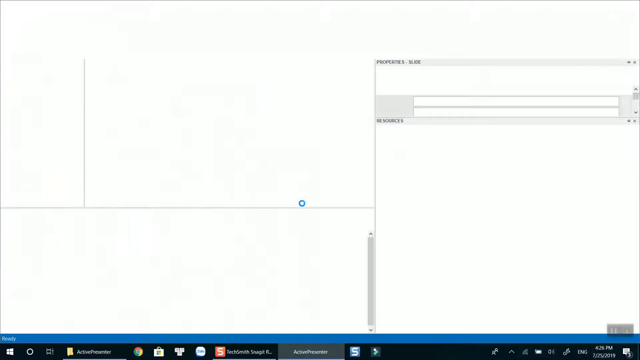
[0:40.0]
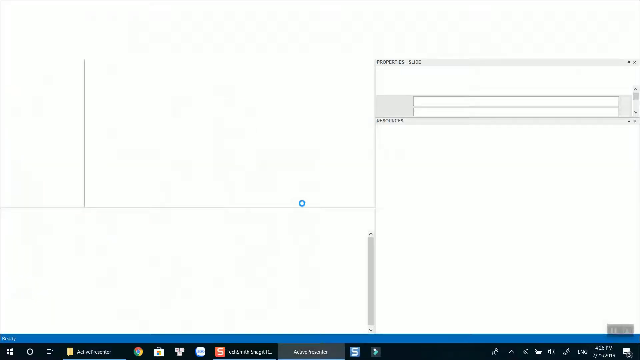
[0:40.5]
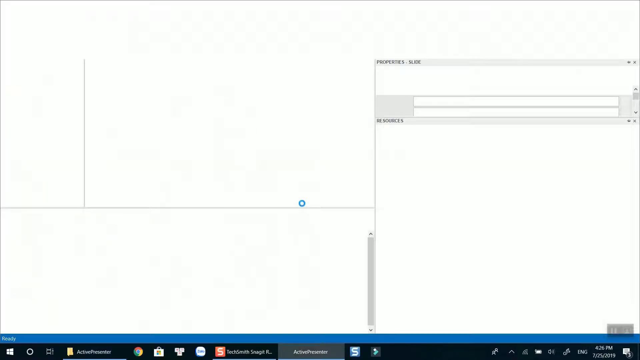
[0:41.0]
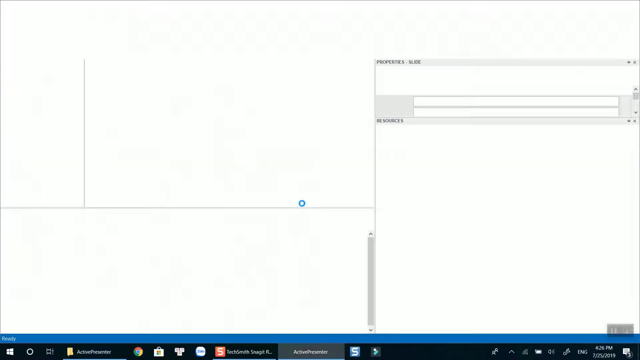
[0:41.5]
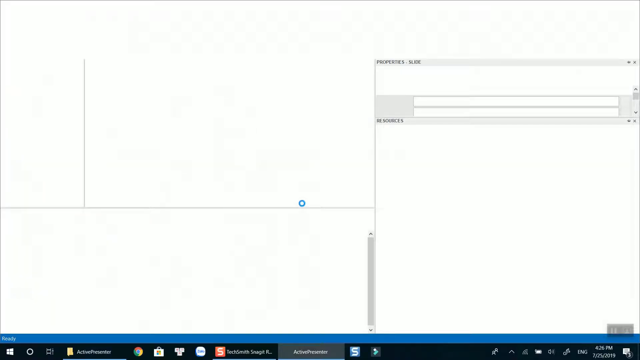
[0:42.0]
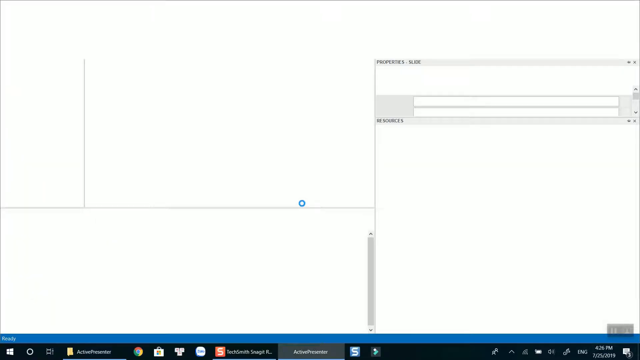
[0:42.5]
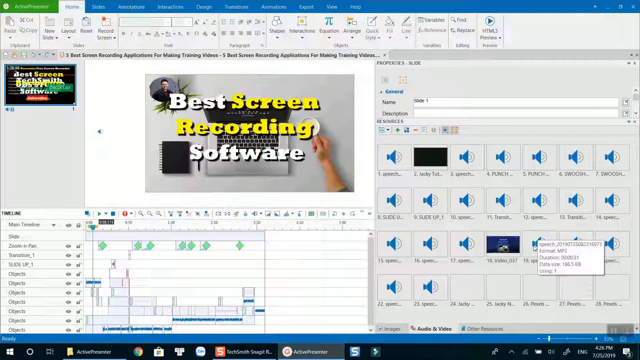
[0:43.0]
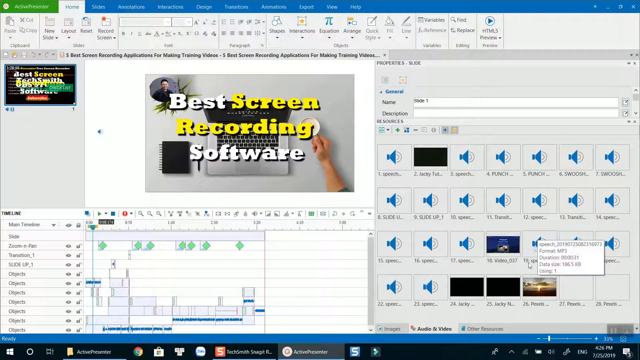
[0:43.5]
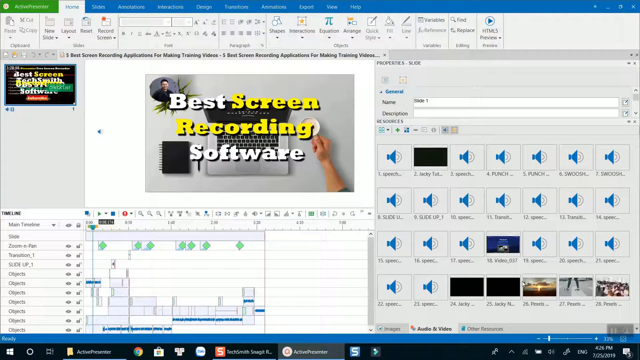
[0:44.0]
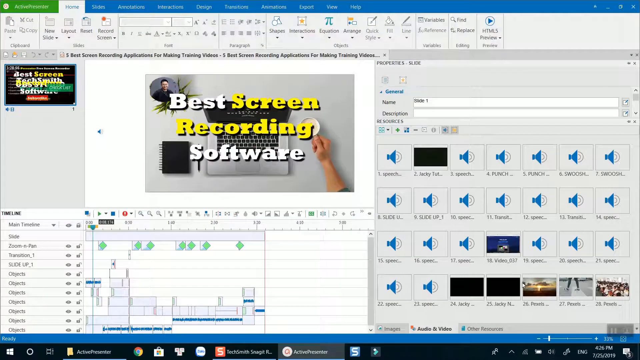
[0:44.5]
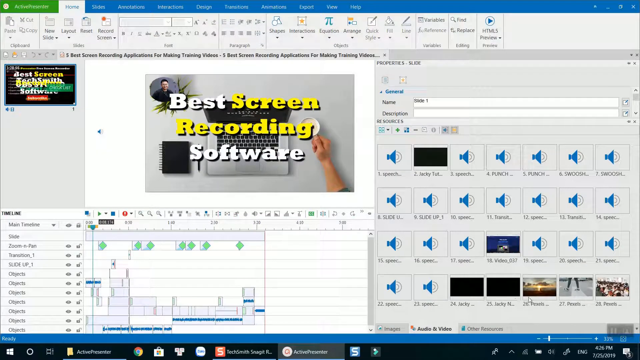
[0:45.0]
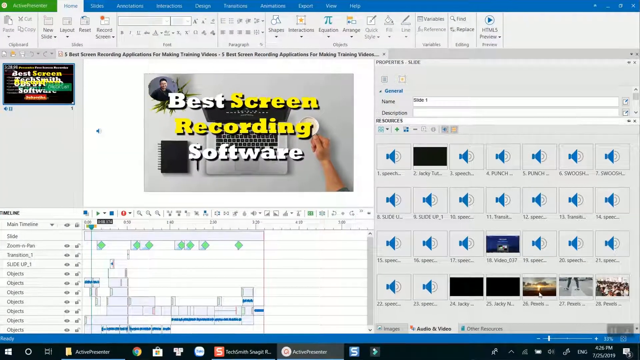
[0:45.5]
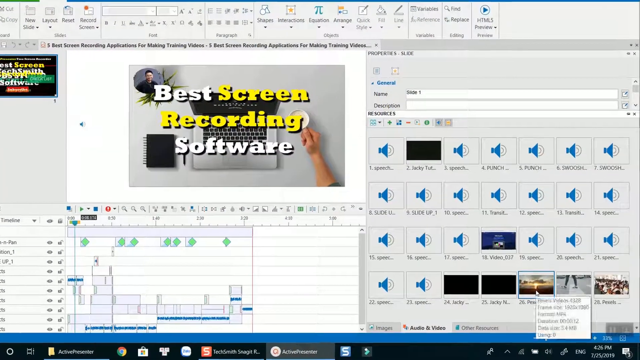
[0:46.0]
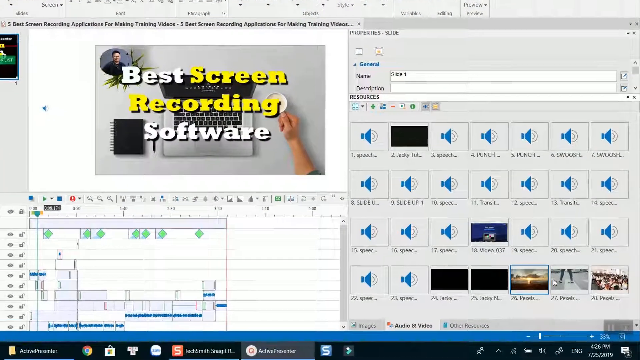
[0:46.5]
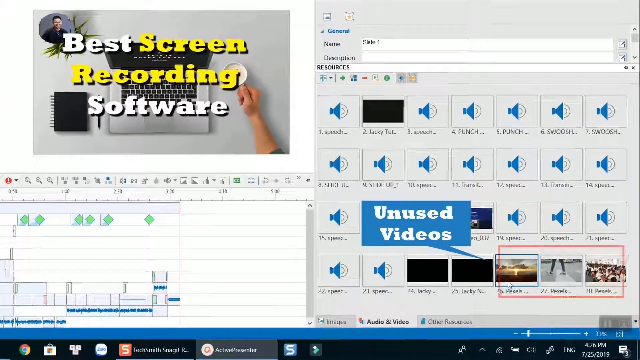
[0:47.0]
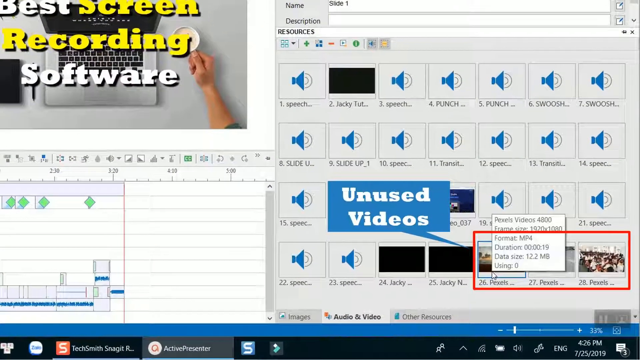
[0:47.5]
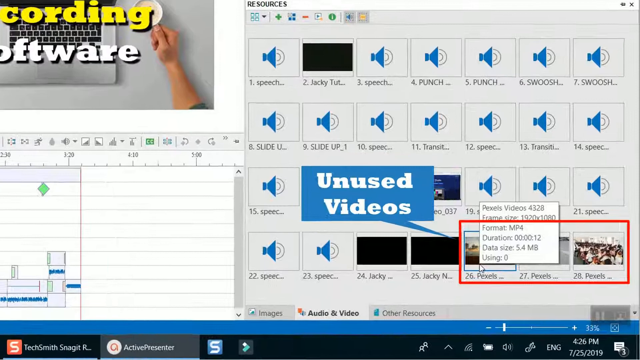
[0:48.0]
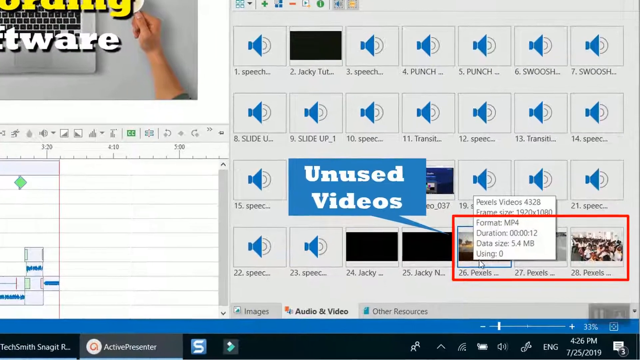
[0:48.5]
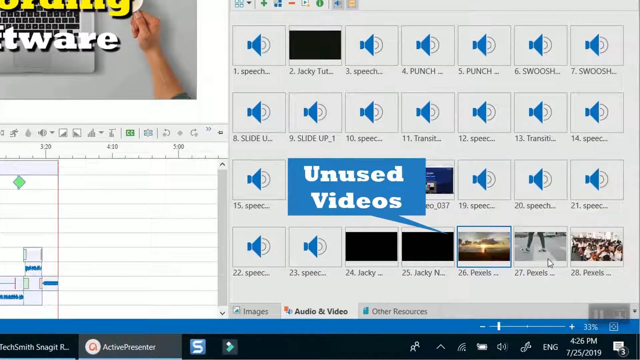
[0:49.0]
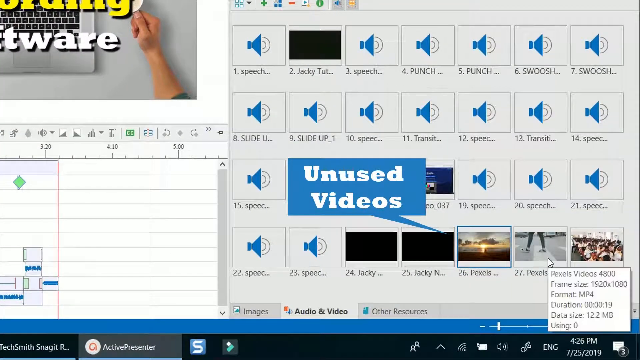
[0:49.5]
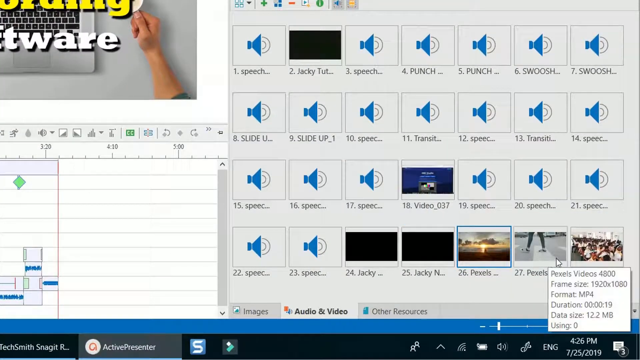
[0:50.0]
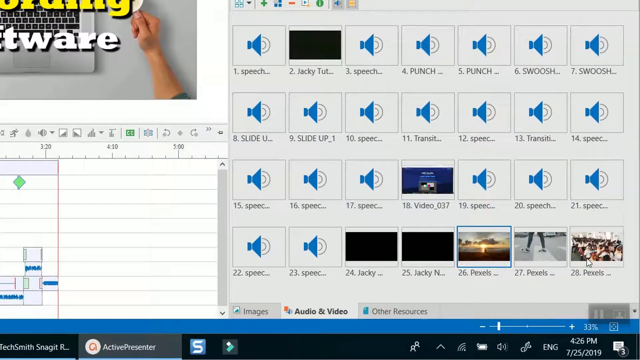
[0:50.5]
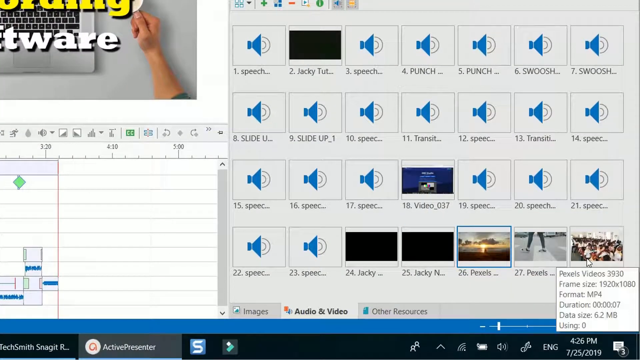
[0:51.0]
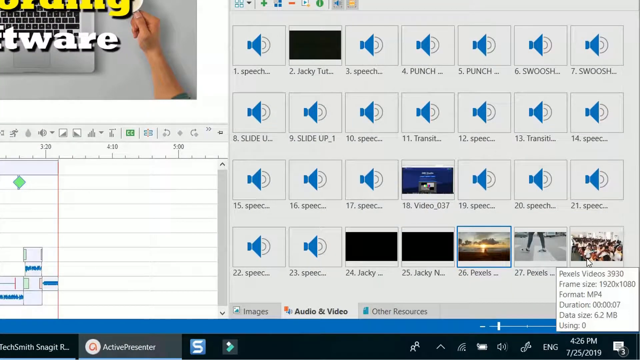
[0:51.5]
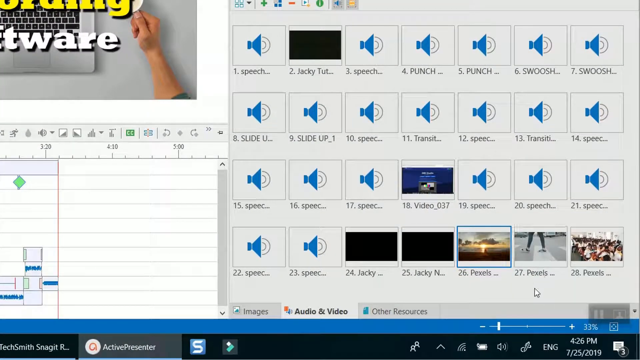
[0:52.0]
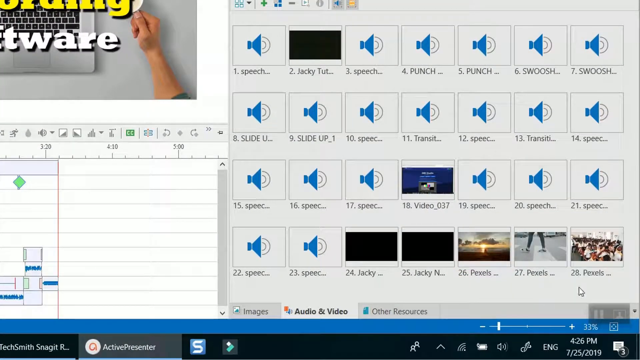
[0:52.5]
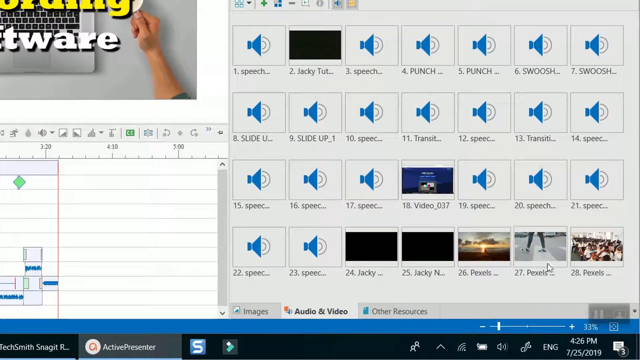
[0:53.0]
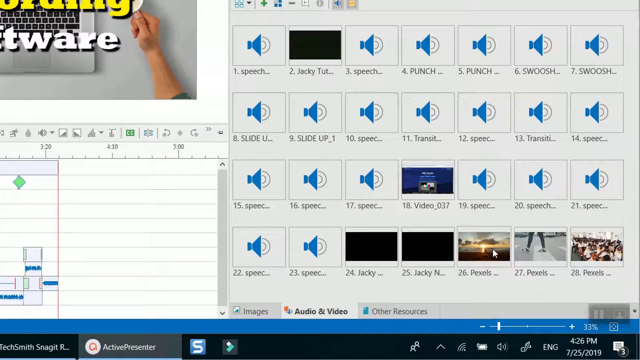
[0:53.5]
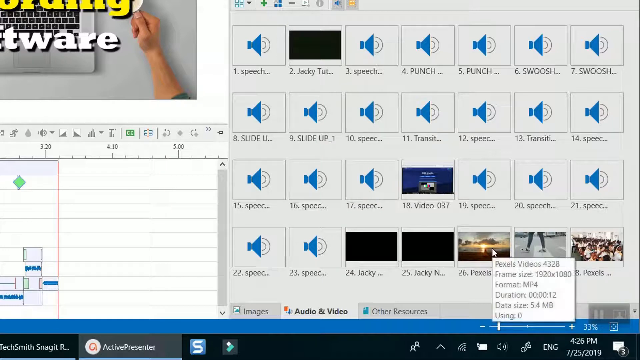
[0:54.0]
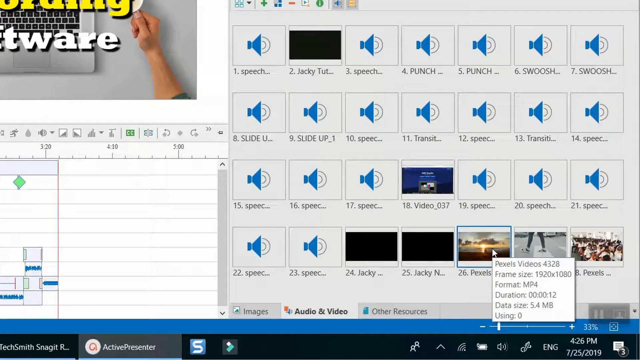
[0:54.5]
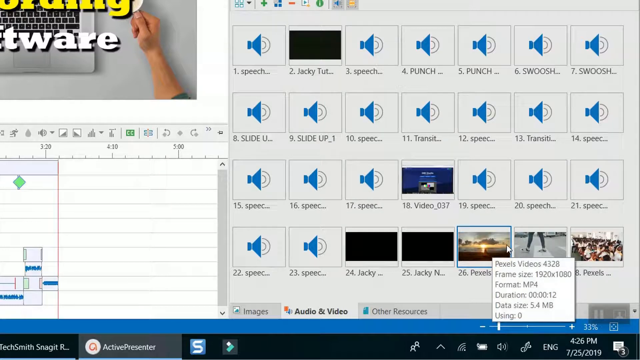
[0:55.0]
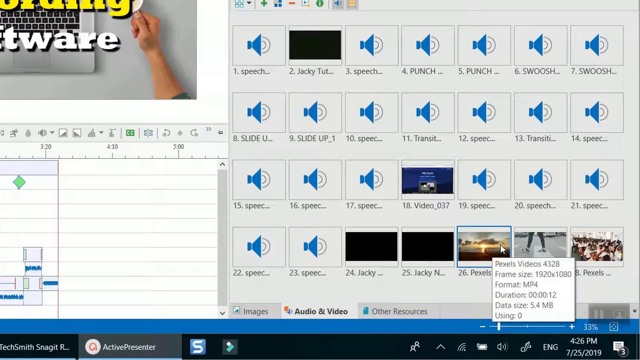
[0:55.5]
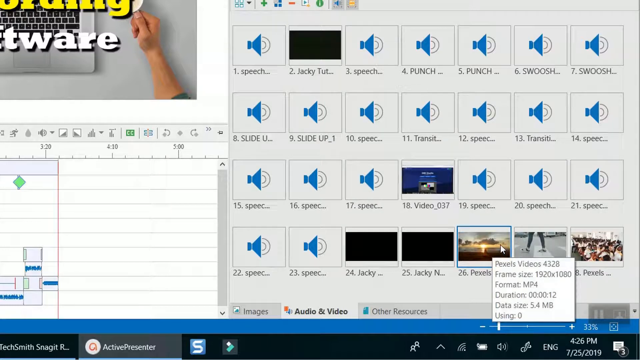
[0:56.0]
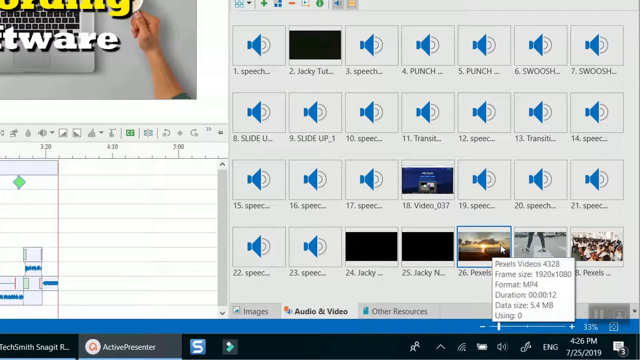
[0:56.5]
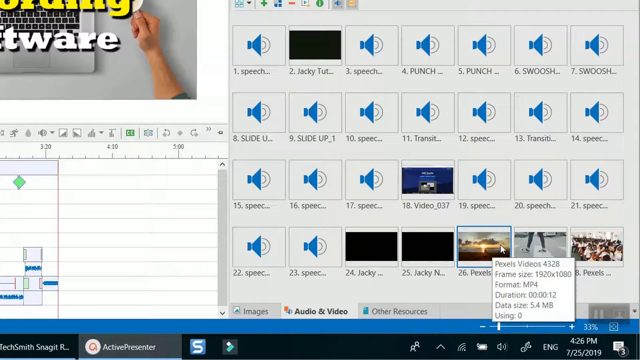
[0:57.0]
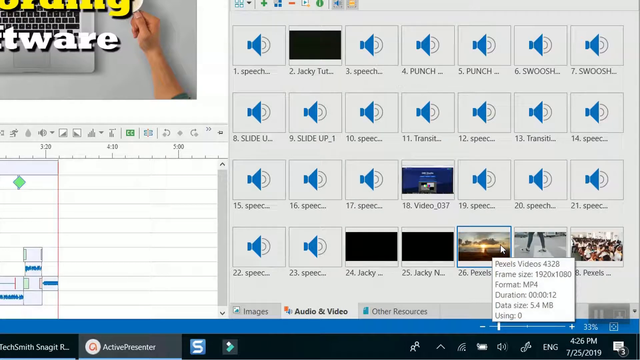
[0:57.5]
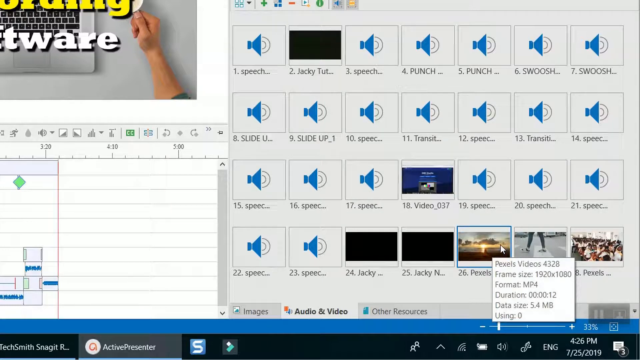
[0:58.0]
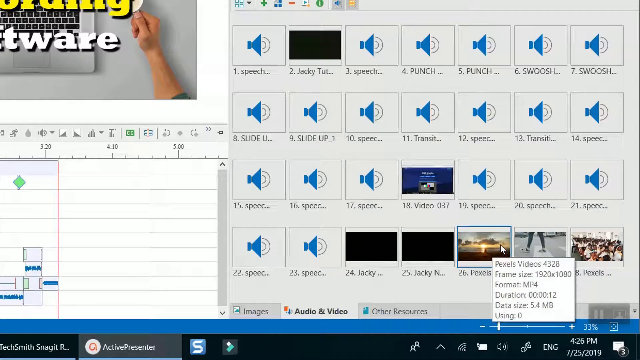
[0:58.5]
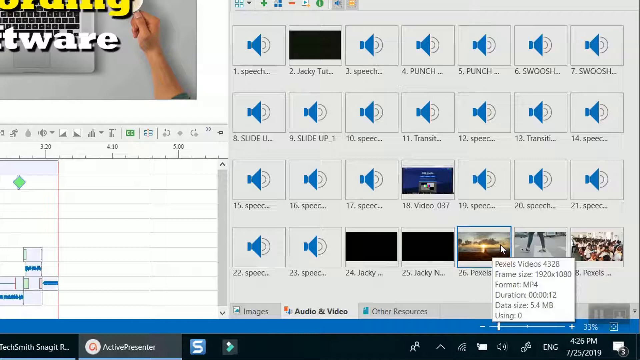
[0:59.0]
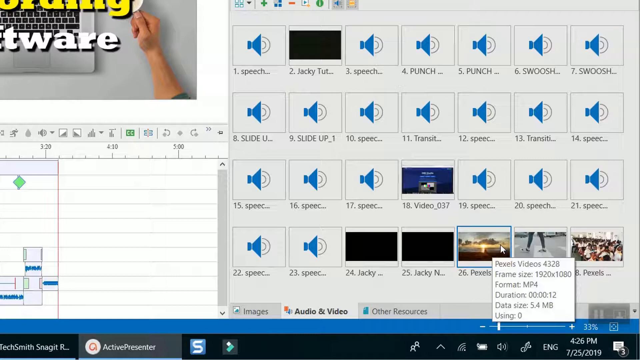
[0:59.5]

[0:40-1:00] The computer is now busy with some kind of software. A black rectangle on screen reads "Active Presenter, Free Screen Recorder, Best Screen Recording Software, Subscribe, Personal Opinion," and there is a block that says "Checklist," all overlaid in an advertising block. Behind it, the software looks more like video editing software than screen recording software: layers at the bottom allow several different things in the clip to be adjusted, and to the right are the files available for the video, including speech and sound files and video files. The text still says "best screen recording software."